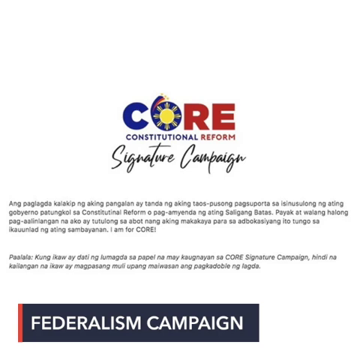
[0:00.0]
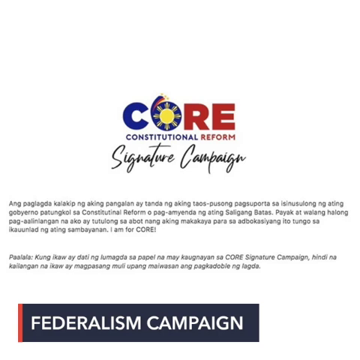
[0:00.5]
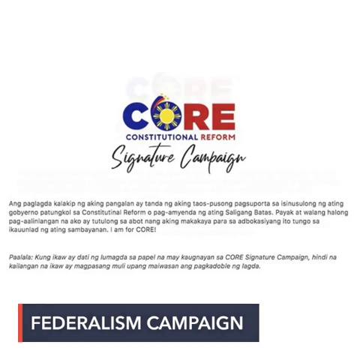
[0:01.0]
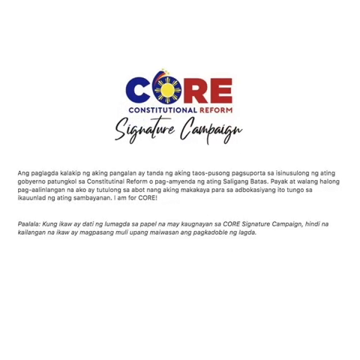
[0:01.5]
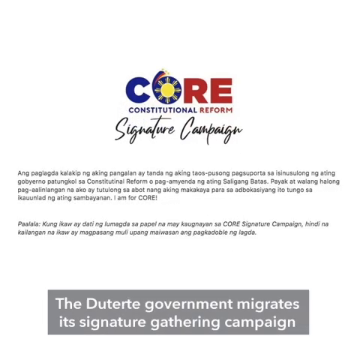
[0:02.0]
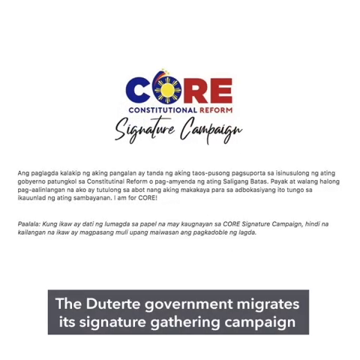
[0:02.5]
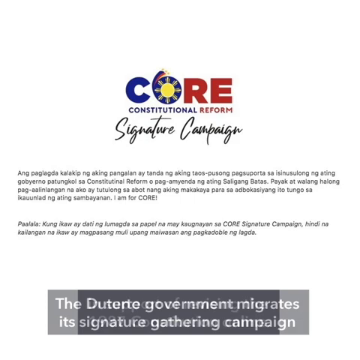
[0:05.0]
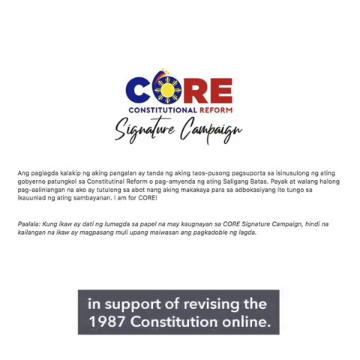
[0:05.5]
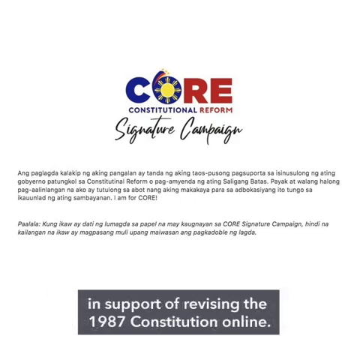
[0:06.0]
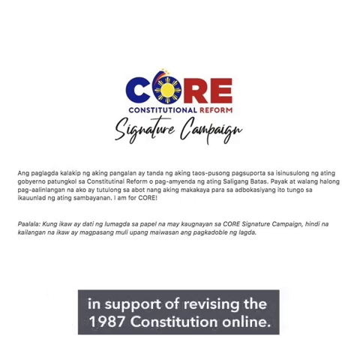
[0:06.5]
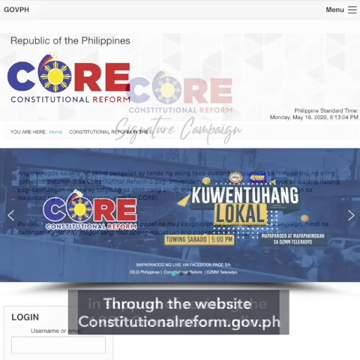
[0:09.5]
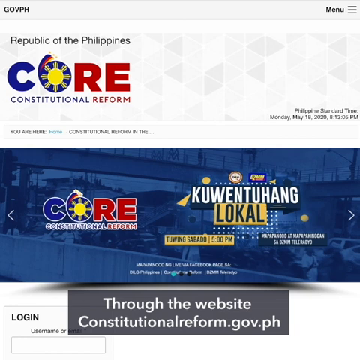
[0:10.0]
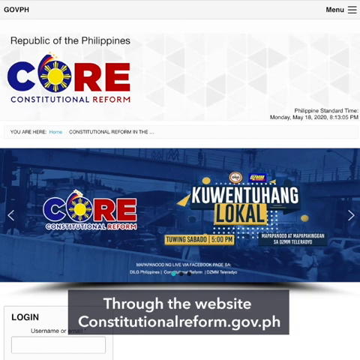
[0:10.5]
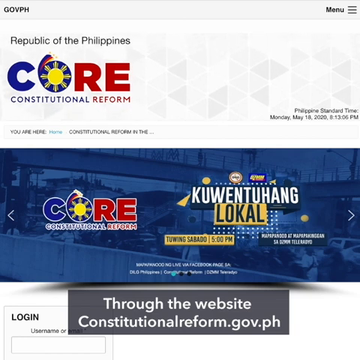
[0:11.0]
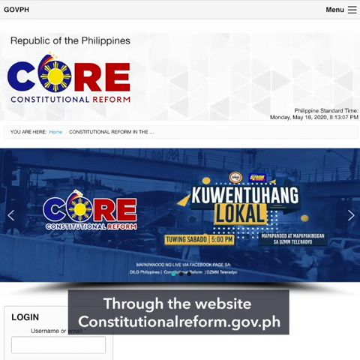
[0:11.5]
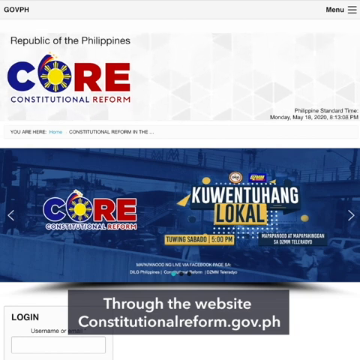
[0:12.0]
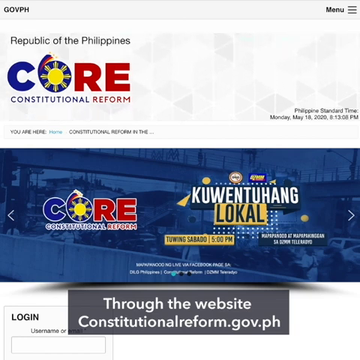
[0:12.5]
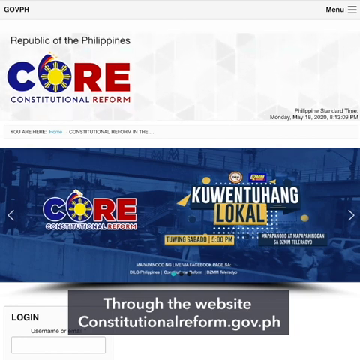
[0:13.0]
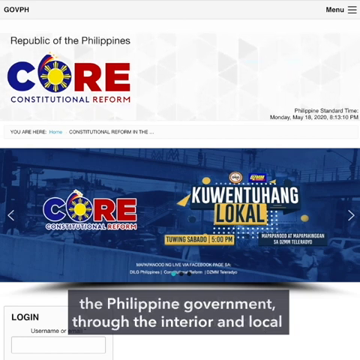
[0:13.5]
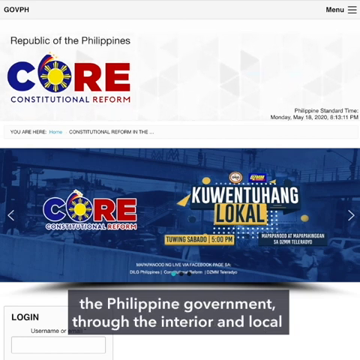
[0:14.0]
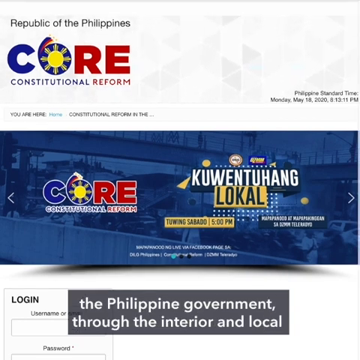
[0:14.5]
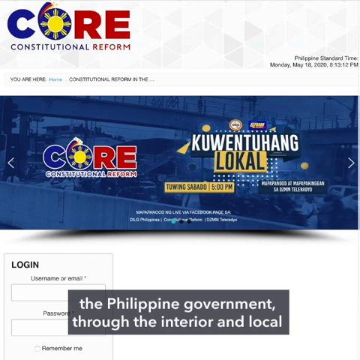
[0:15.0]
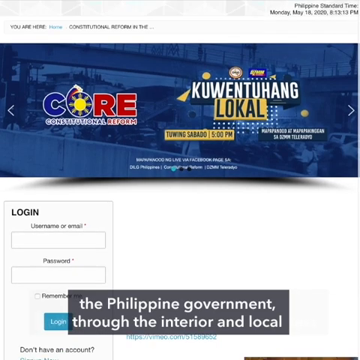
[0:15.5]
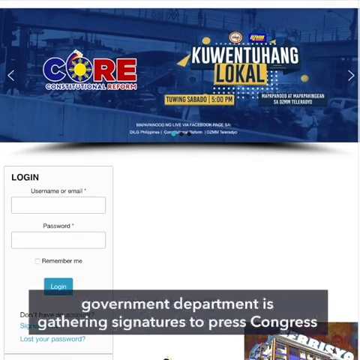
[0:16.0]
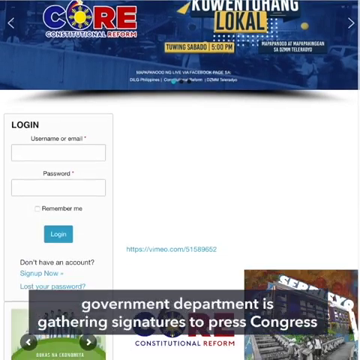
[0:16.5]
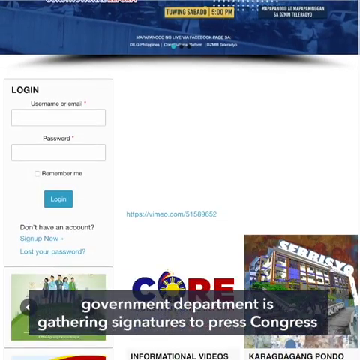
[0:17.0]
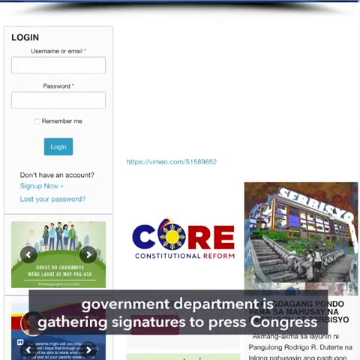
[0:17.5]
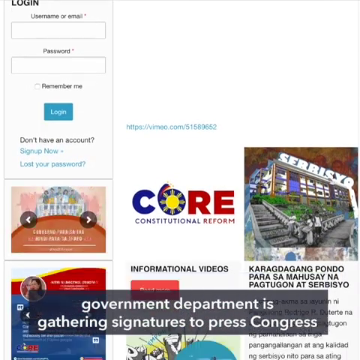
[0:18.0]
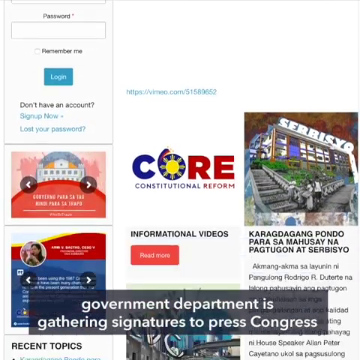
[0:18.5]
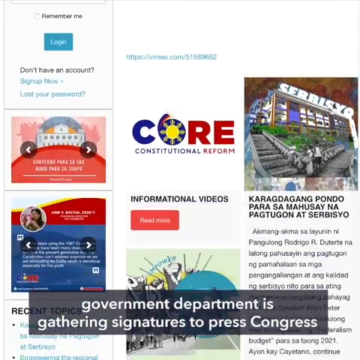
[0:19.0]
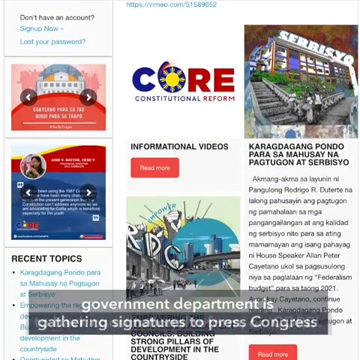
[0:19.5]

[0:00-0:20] A white document appears with "core" in the center: the C is blue, the O is blue with a yellow center and some yellow radiating from it, and the R and E are black. Underneath it says "constitutional reform," with "reform" in red, and below that is "signature campaign" followed by text that is not in English. A blue banner at the bottom, with a small bit in red, has white text reading "federalism campaign." A translation follows in a gray box with white text: "the Duterte government migrates its signature gathering campaign in support of revising the 1987 Constitution" through the website constitutionalreform.gov.ph. Then a screen about the core constitutional reform Kuwentuhang lokal appears.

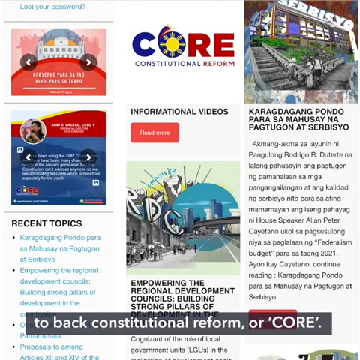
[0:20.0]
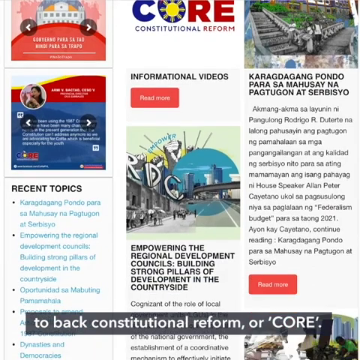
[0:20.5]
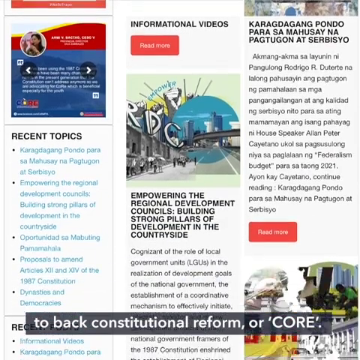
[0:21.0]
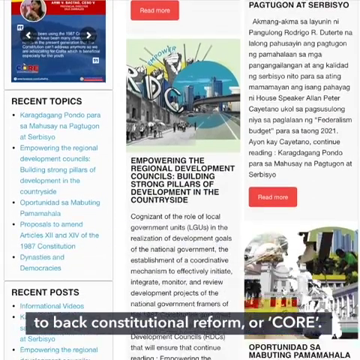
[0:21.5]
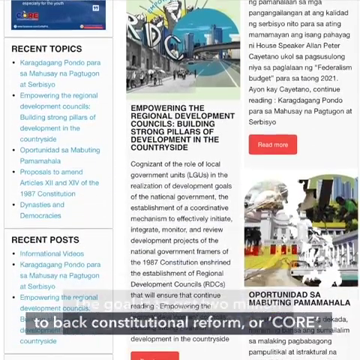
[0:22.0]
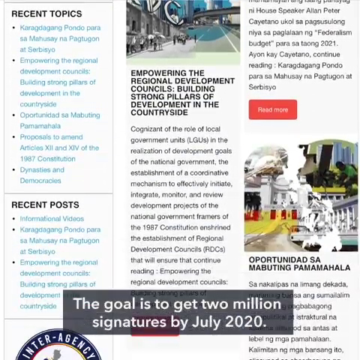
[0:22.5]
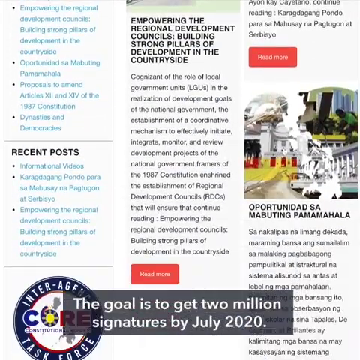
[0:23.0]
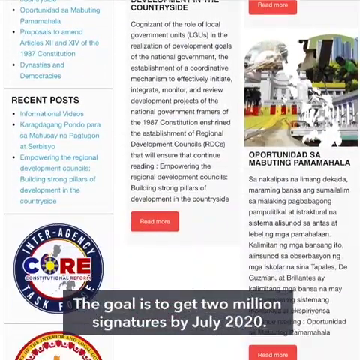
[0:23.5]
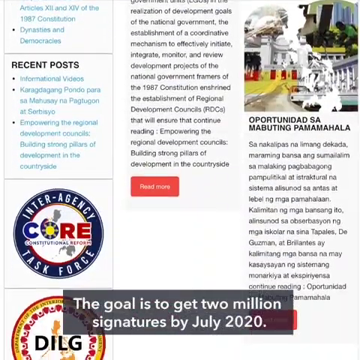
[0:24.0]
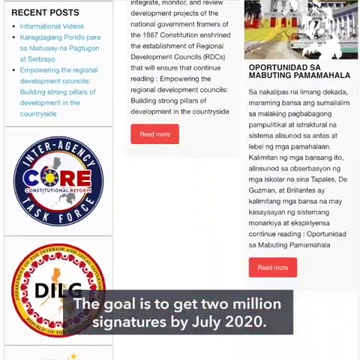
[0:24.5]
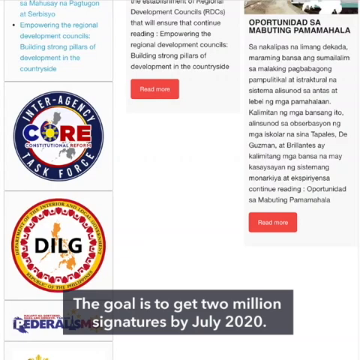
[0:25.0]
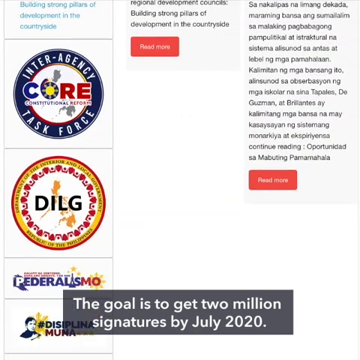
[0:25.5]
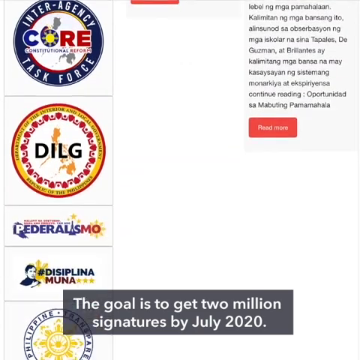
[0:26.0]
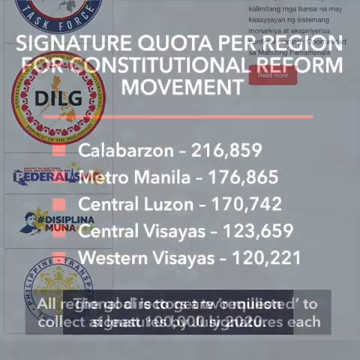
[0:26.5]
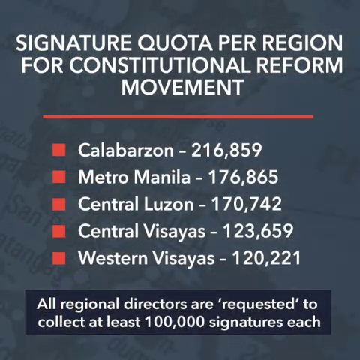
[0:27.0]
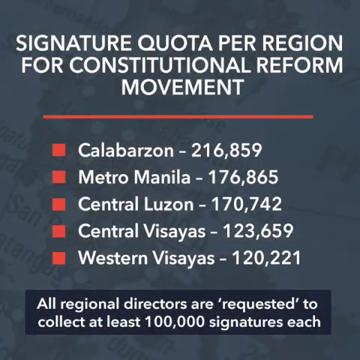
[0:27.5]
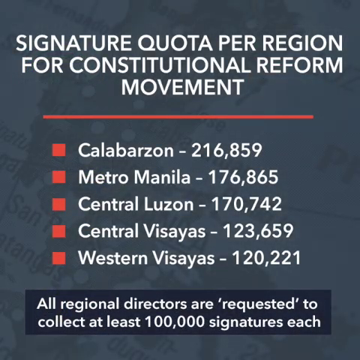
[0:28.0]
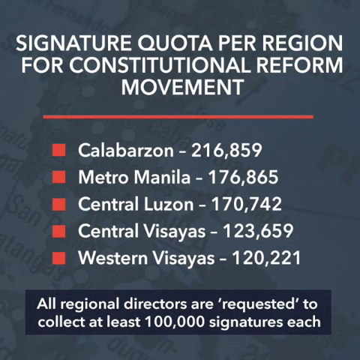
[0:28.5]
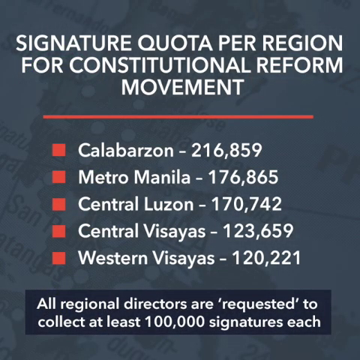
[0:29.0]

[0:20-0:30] A busy poster with three columns is shown. The top of the center column says "core," with "constitutional reform" underneath, then text reading "informational videos" and a red button that says "read more." Below that is a video, an animation of a building, a city, a bridge and a street, with the text "empowering the Regional Development Council's building strong pillars development." On the right is an illustration of stairs leading up to a building, with text that is not in English. On the left is an inset of a video with an illustration of a white building and some red and pink. Below that is another video with an inset of a woman against a background of blue, red, yellow and white. Further down is "recent topics" with four bullet points, and a gray box at the bottom holds the translation "to back constitutional reform or core."